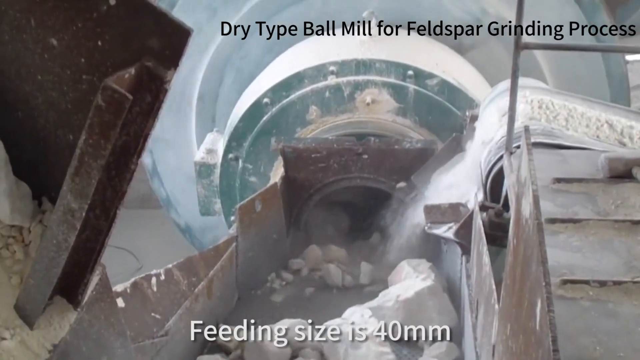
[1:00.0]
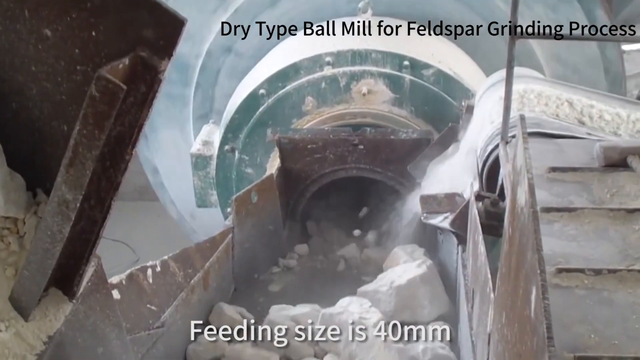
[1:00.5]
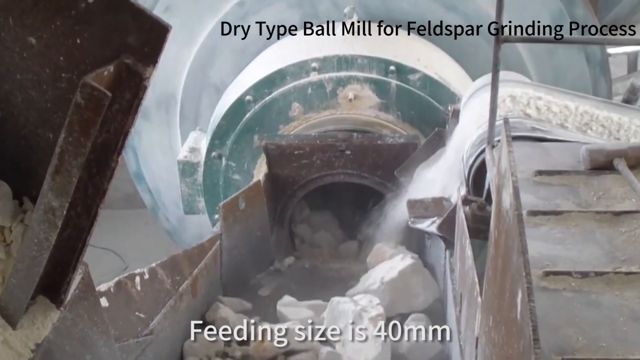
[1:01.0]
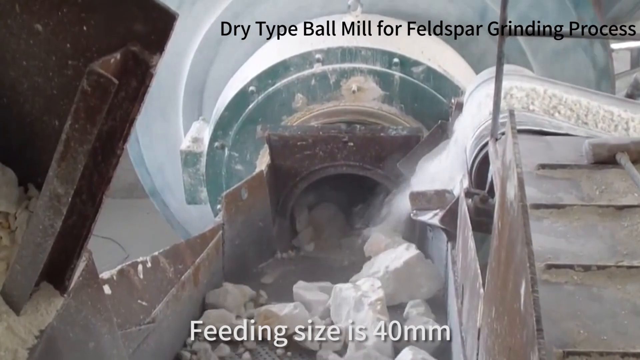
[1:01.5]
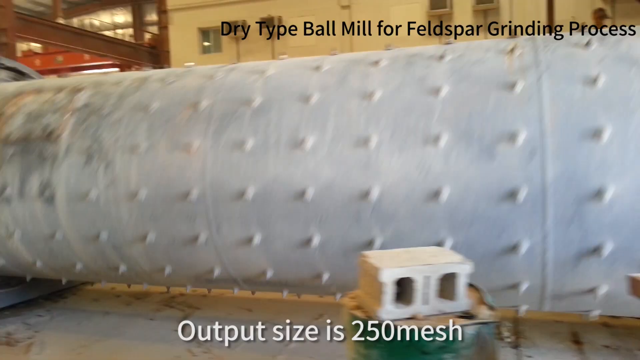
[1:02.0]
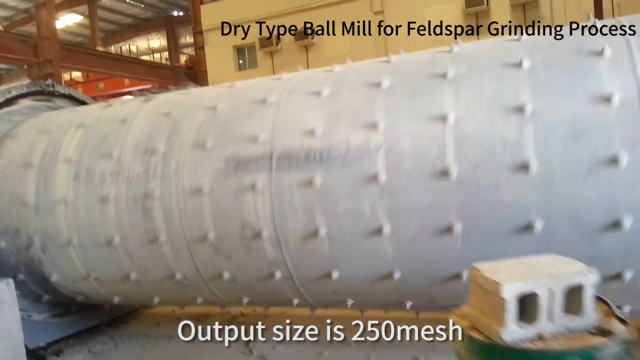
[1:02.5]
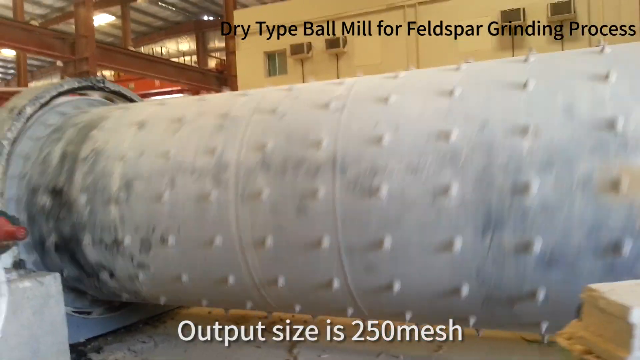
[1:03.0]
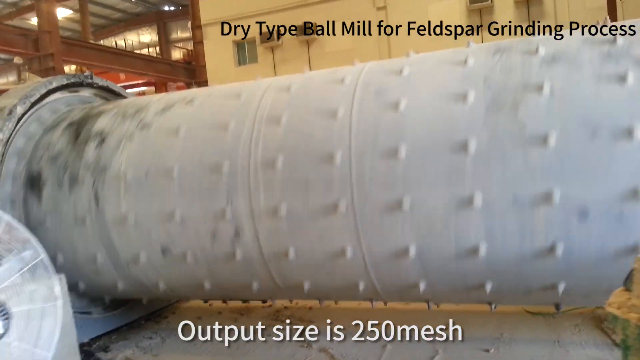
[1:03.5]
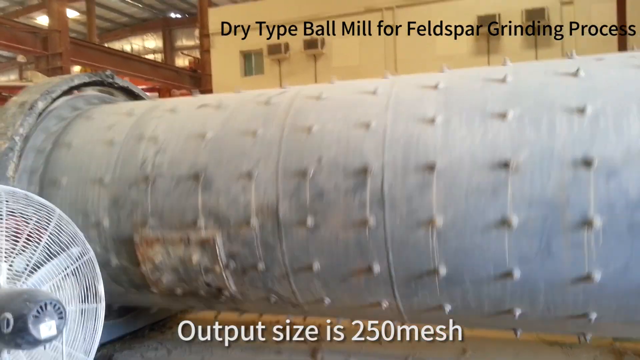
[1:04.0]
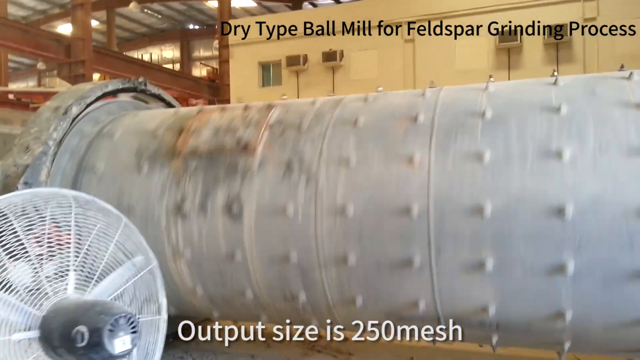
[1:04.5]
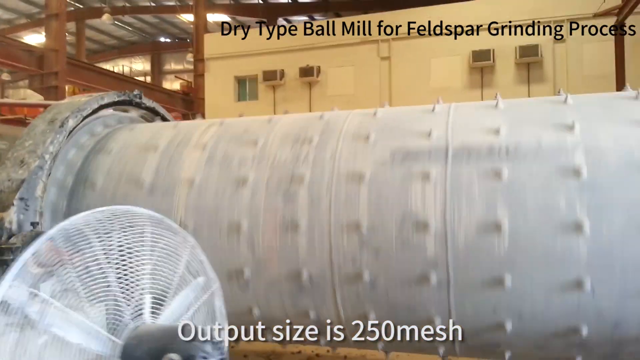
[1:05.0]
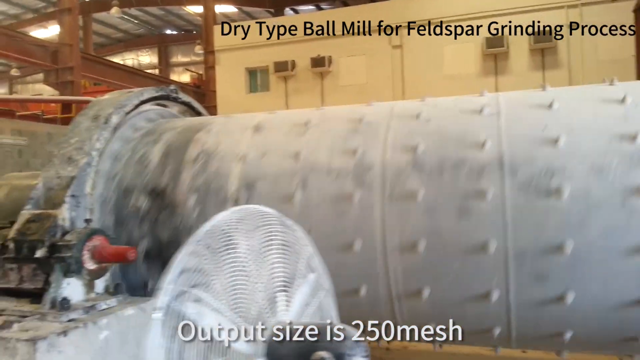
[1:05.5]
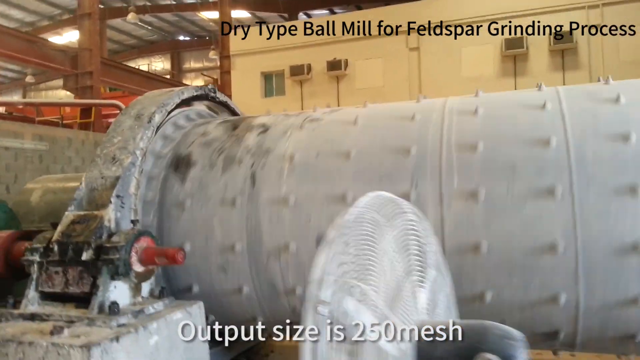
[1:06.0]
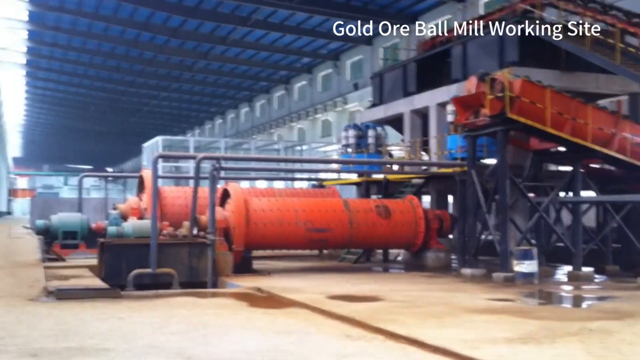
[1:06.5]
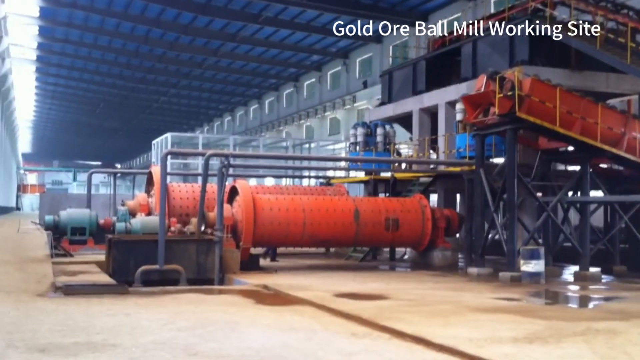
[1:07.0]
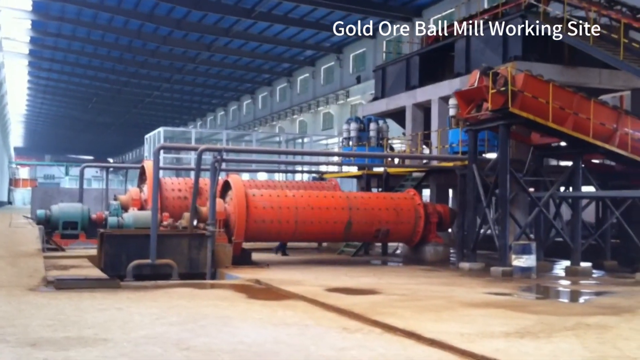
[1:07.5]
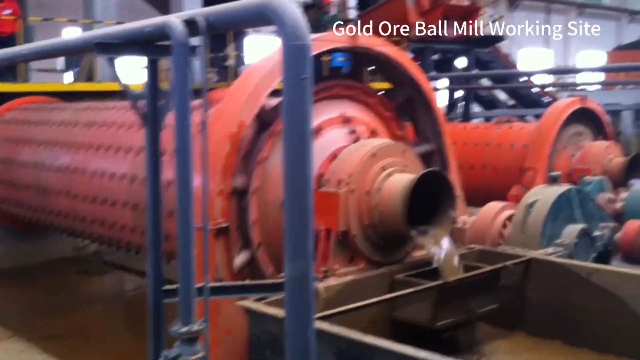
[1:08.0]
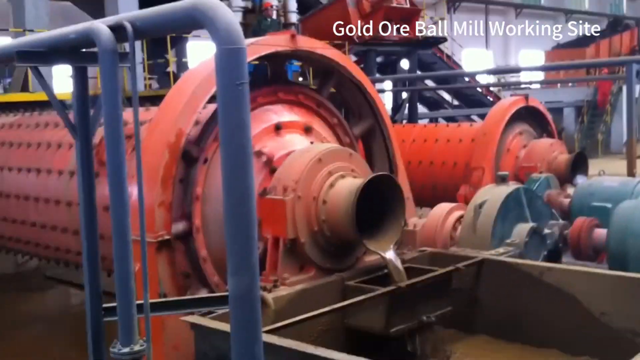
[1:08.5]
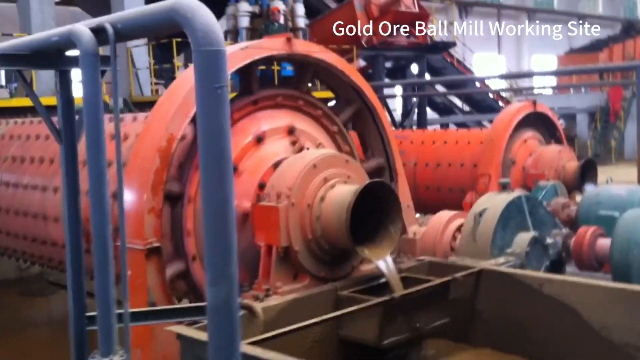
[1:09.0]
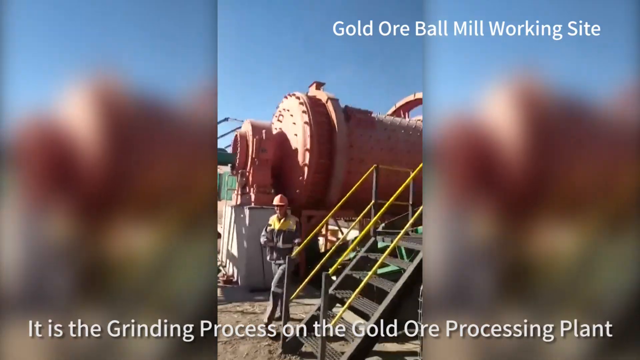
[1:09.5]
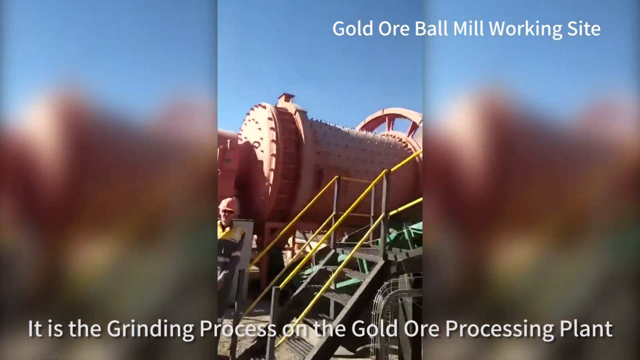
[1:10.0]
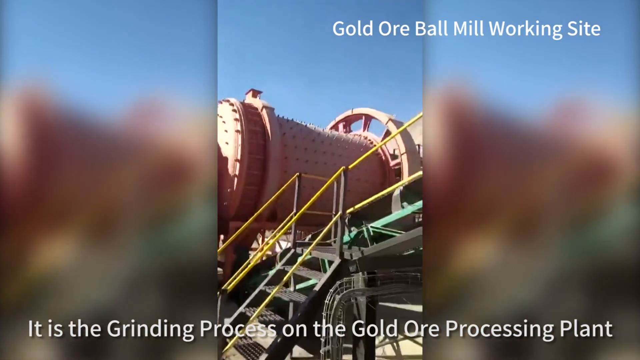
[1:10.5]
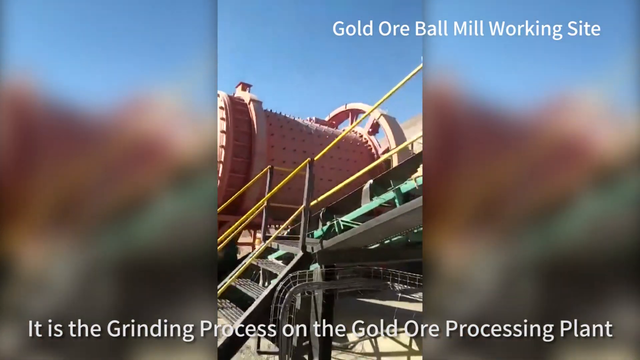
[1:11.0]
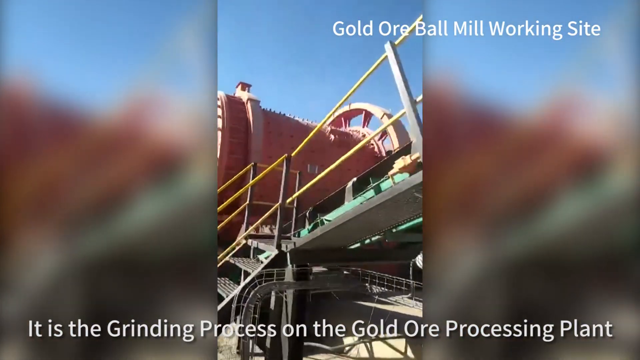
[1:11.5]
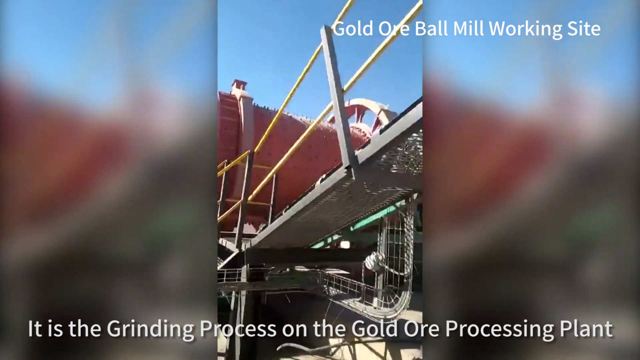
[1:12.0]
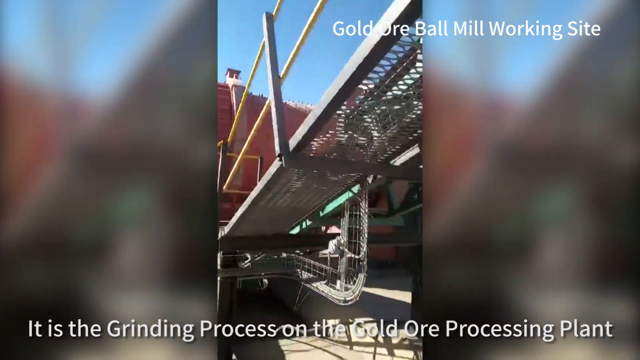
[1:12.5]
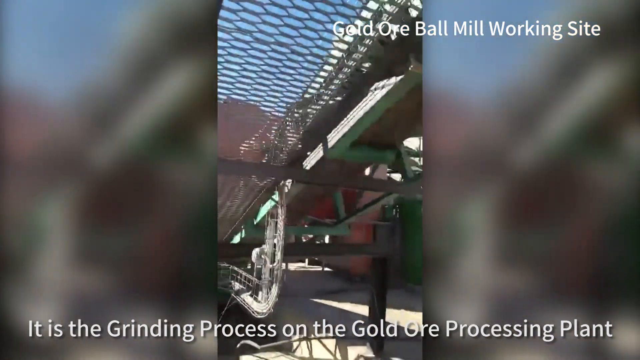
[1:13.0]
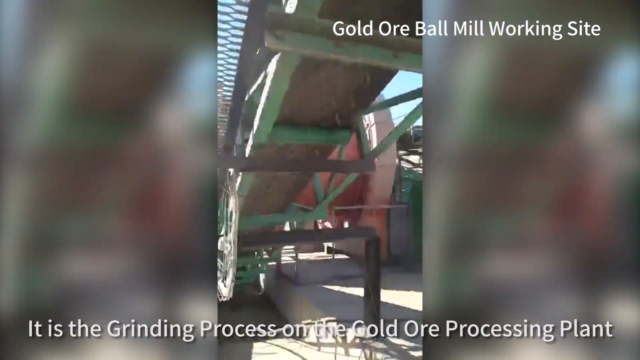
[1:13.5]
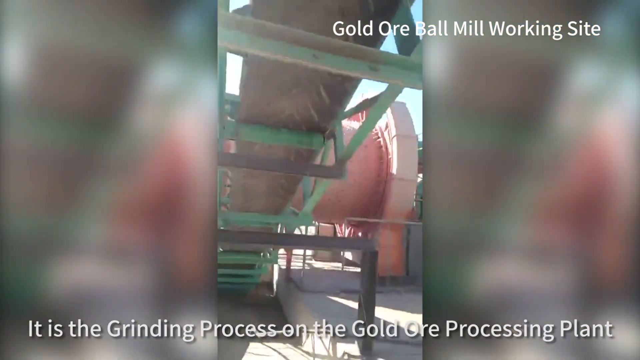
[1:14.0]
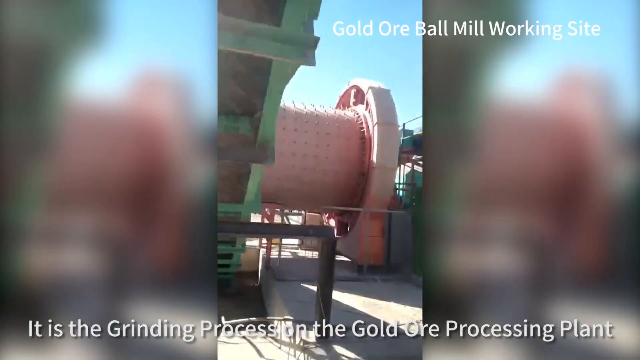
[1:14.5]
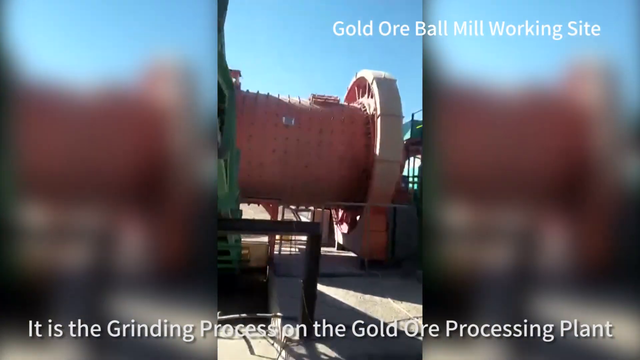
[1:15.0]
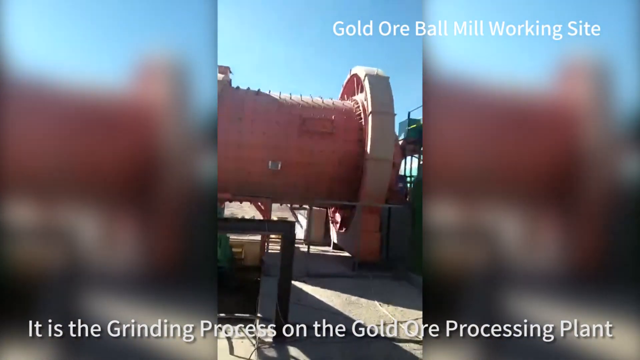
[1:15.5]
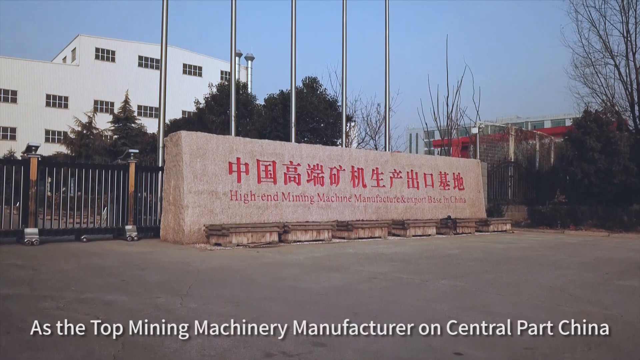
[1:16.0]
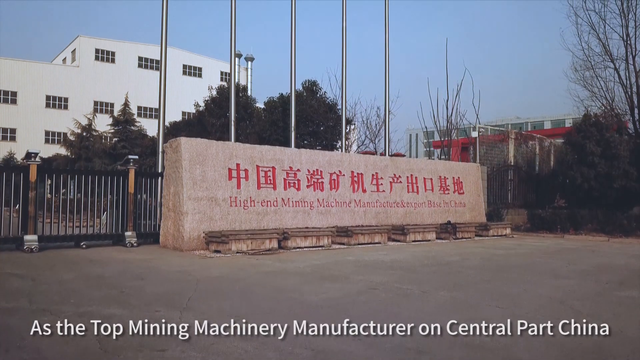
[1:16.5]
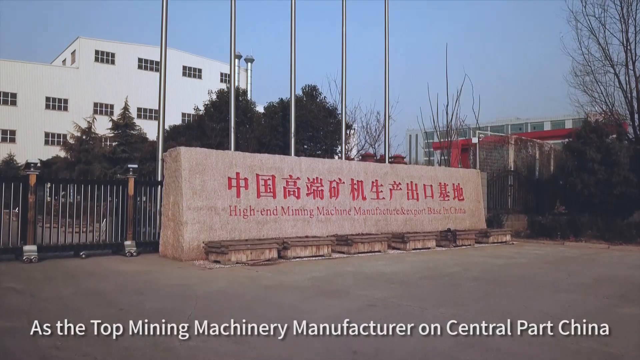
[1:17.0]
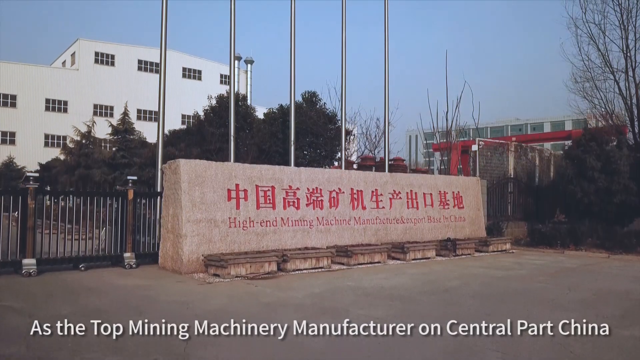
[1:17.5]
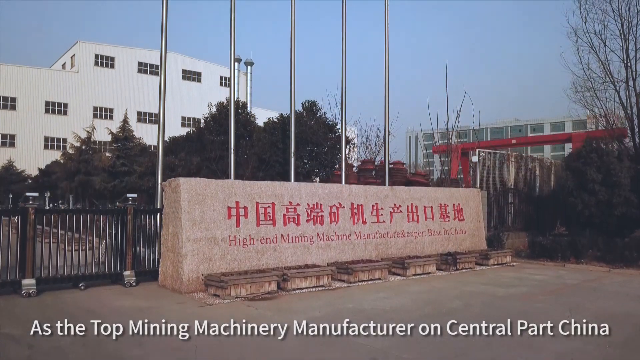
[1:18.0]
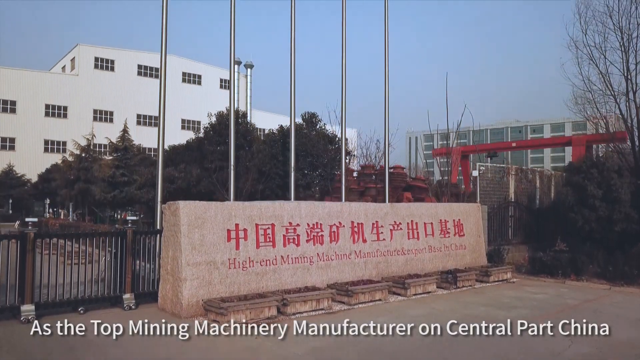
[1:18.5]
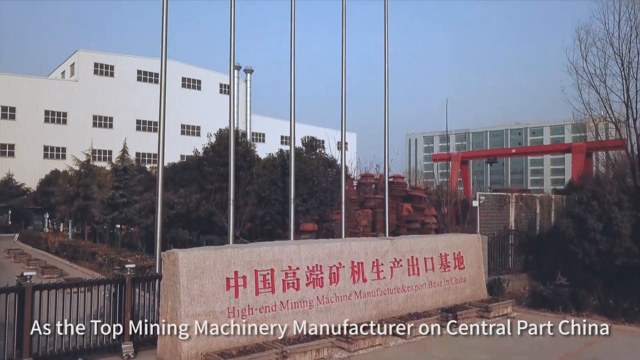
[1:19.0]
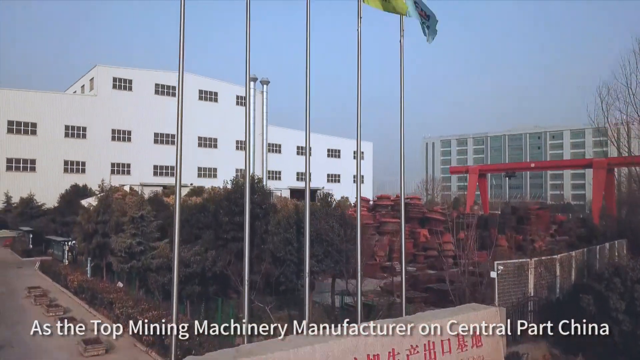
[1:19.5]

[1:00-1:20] Videos of the dry type ball mill for the feldspar grinding process continue, including clips of the machine's interior process with feldspar going into the machine, while subtitles at the bottom give the output size, the inputs, and similar details. Videos of the mill's exterior follow. Then orange mills appear with text reading "gold ore ball mill working site", showing a working site for a gold ore ball mill, and a vertical video from a different angle appears at the bottom of the screen, again with explanatory subtitles. Next, "high-end mining machine manufacturer and export base of China" appears like a logo outside a building, on big stone slabs that also bear Chinese characters. Text at the bottom of the screen reads "this is from the top mining machinery manufacturer in the central part of China". The video rises up, revealing flags above the stone slab. The video is an advertisement for ball mills from a Chinese factory.